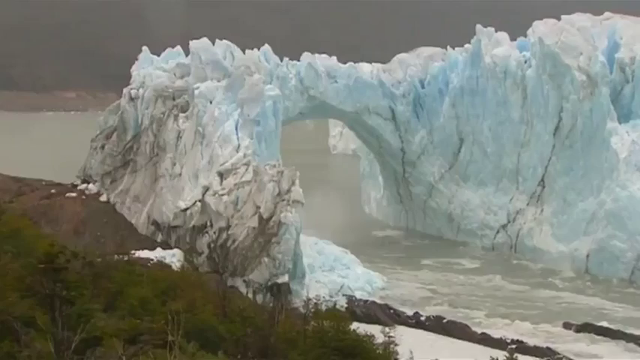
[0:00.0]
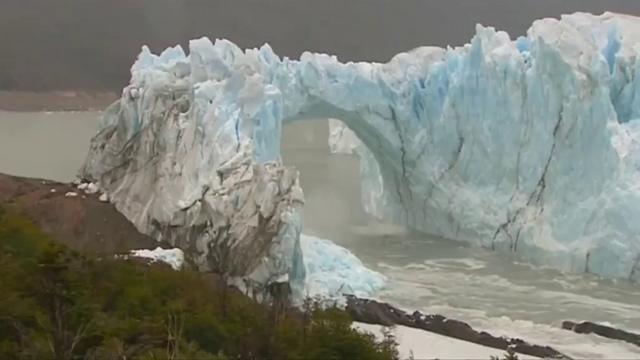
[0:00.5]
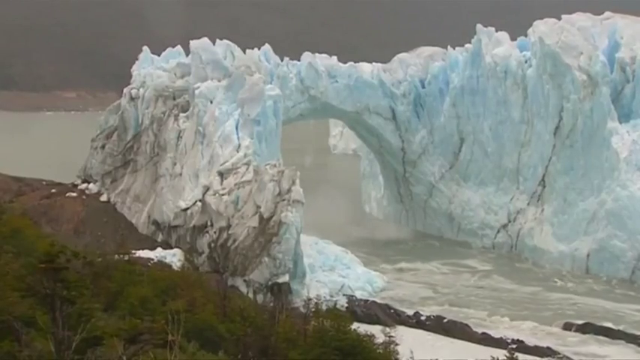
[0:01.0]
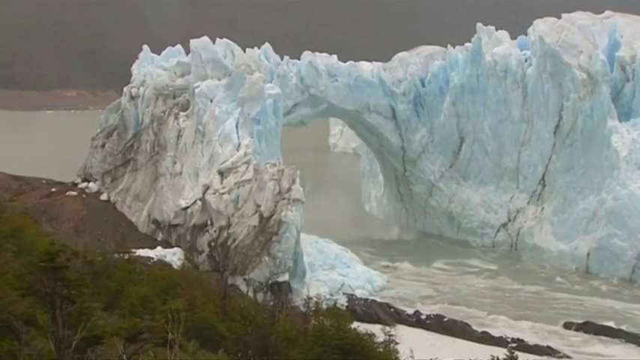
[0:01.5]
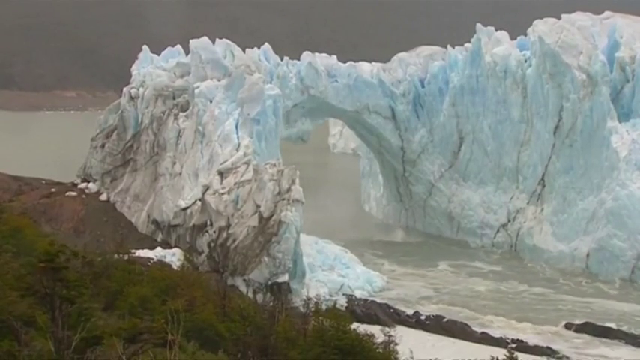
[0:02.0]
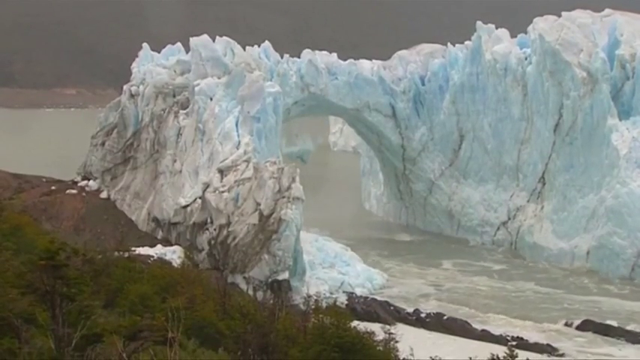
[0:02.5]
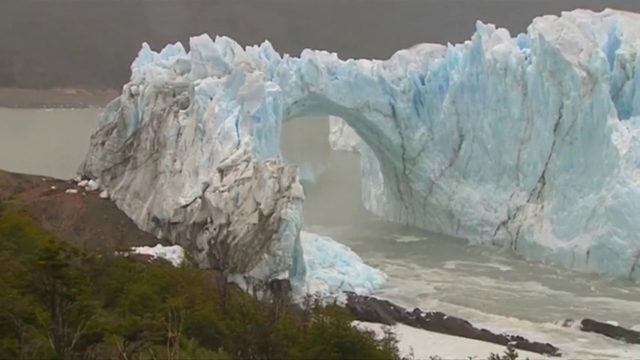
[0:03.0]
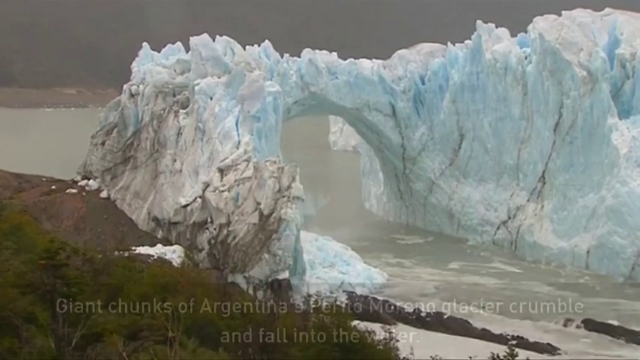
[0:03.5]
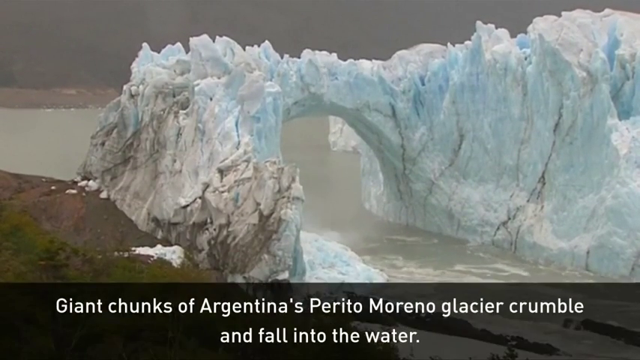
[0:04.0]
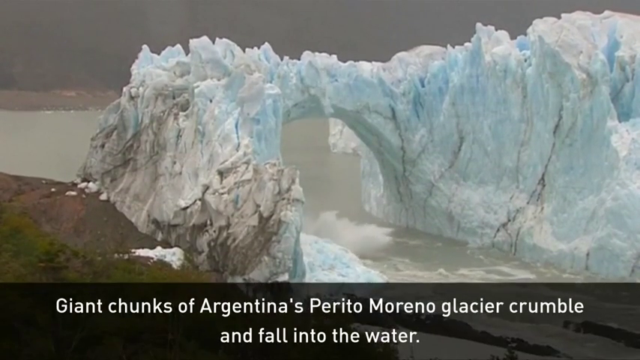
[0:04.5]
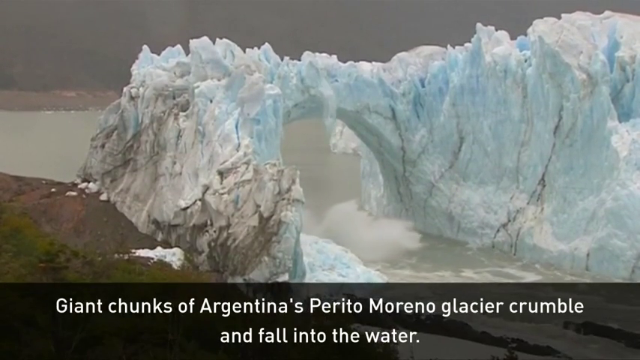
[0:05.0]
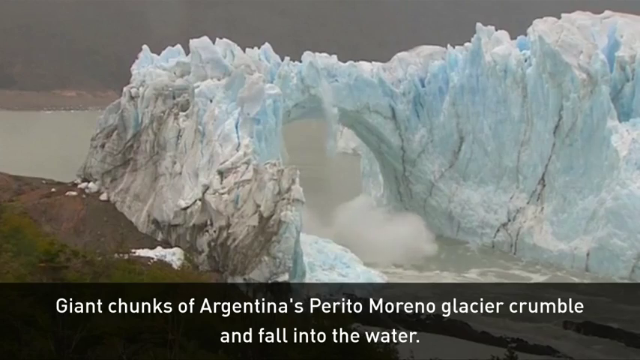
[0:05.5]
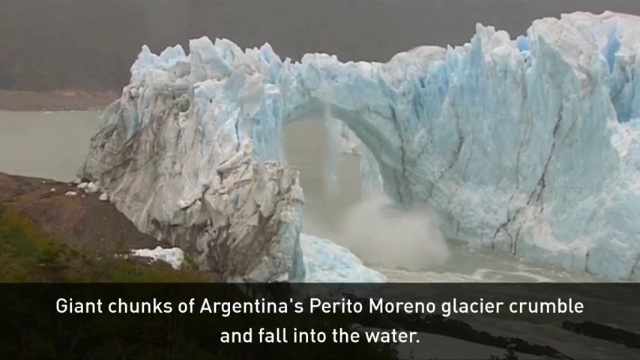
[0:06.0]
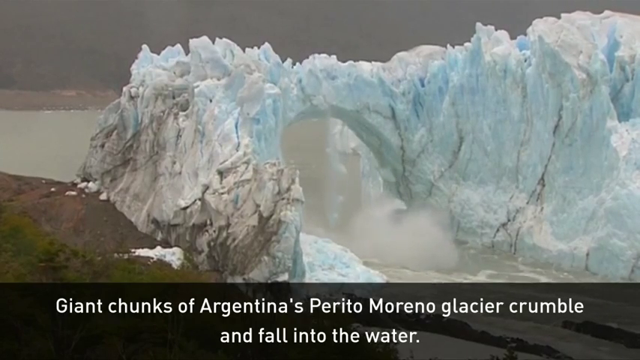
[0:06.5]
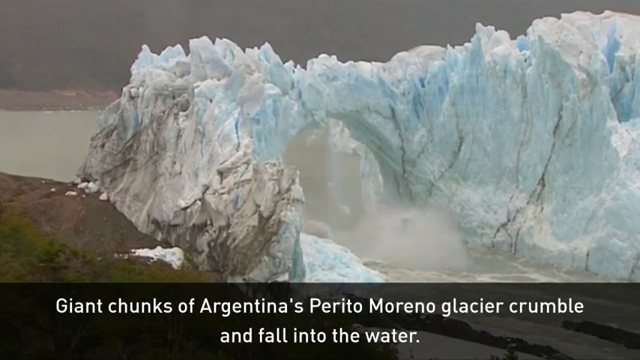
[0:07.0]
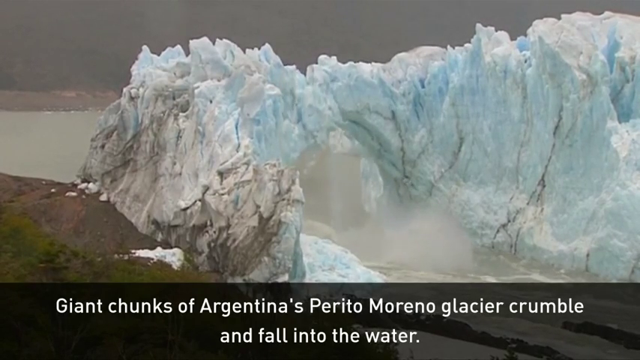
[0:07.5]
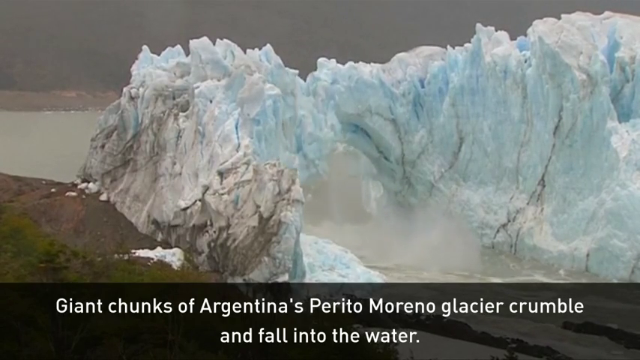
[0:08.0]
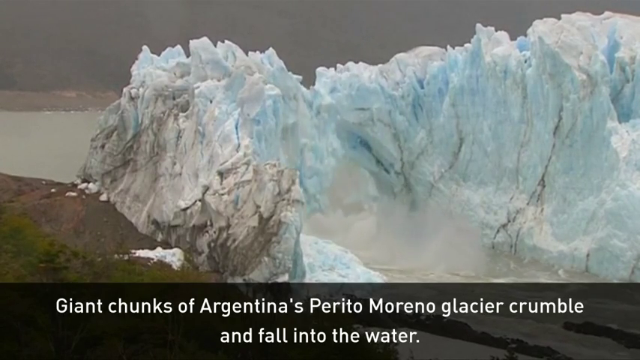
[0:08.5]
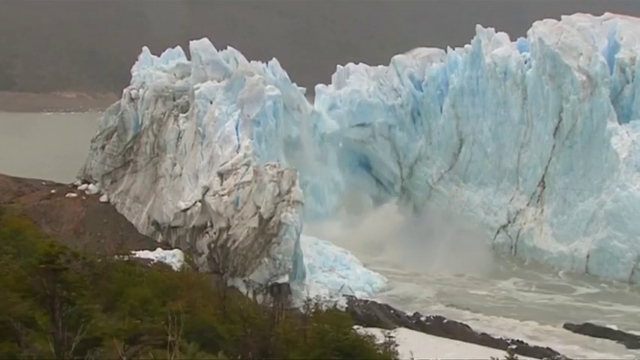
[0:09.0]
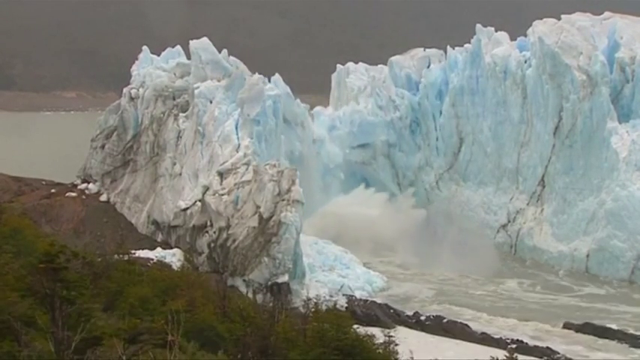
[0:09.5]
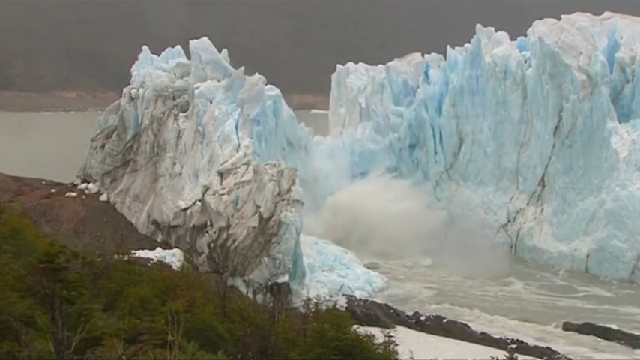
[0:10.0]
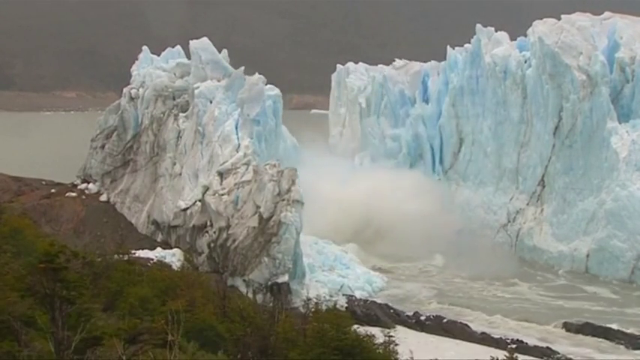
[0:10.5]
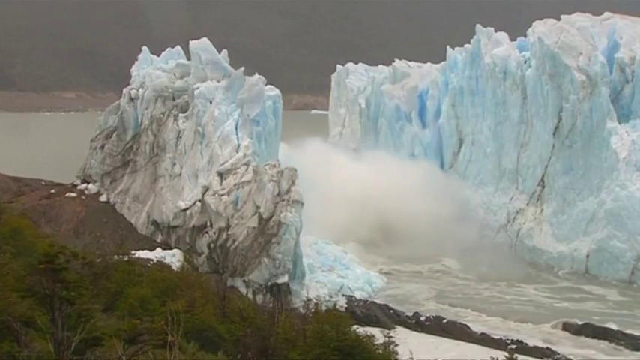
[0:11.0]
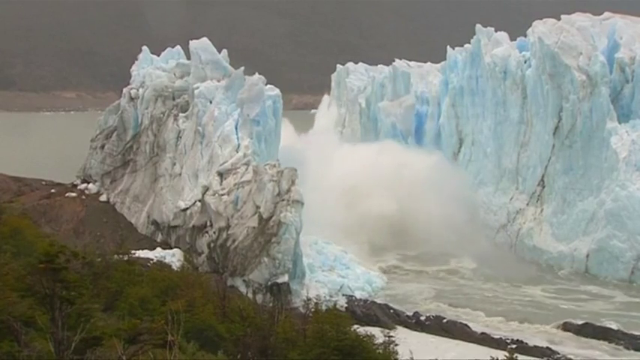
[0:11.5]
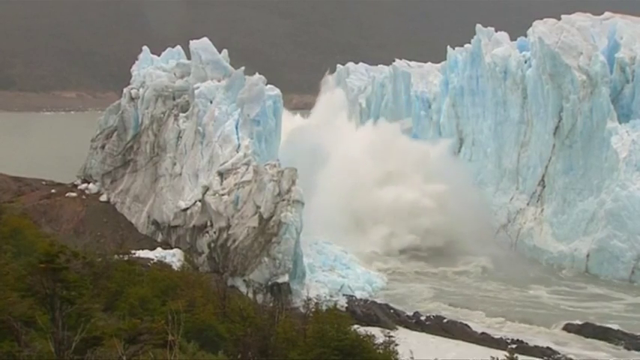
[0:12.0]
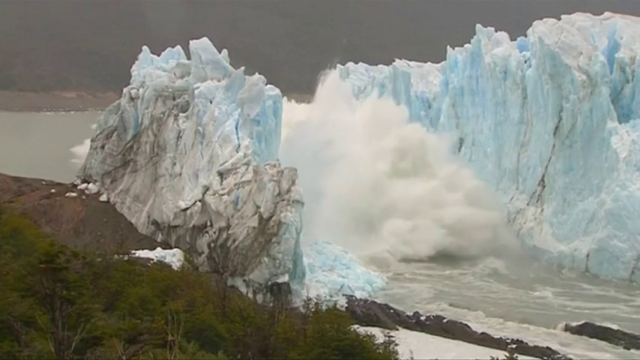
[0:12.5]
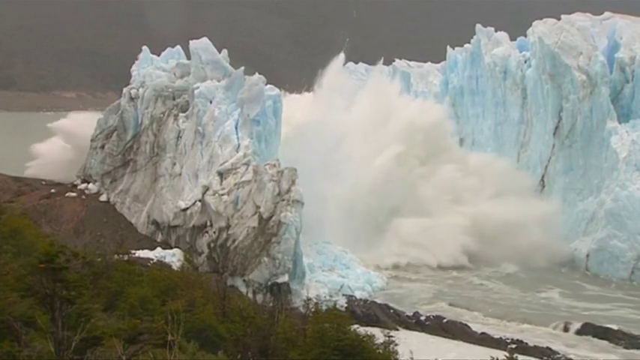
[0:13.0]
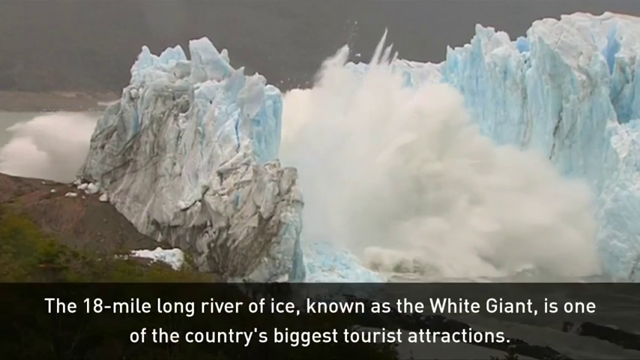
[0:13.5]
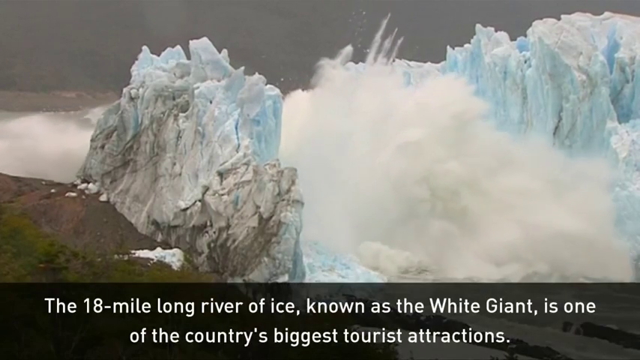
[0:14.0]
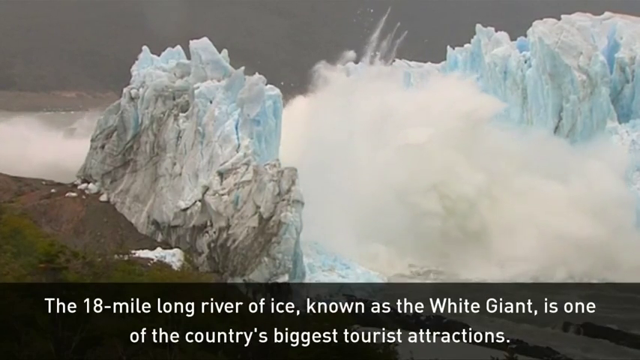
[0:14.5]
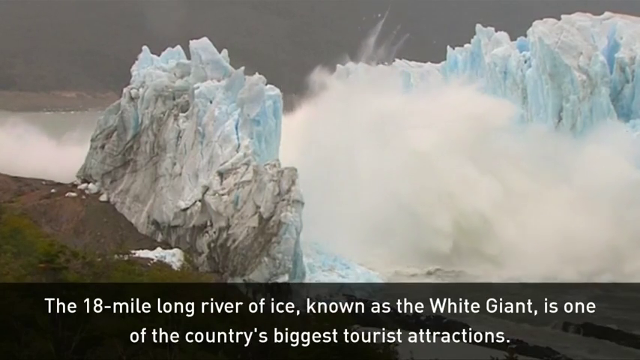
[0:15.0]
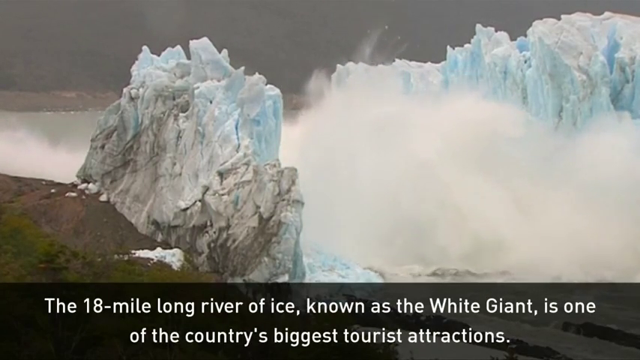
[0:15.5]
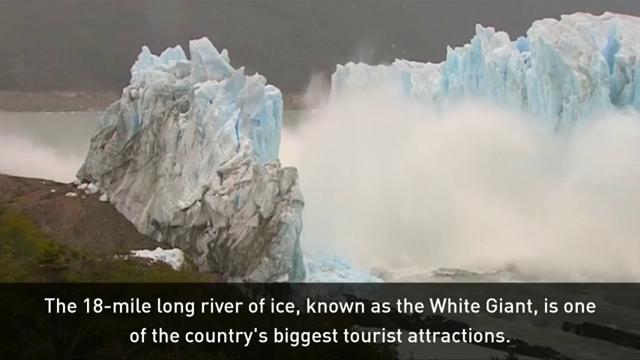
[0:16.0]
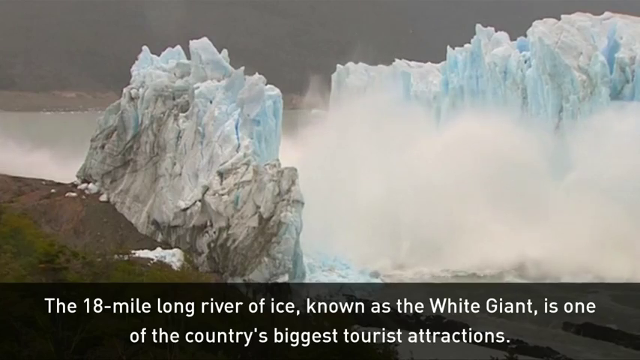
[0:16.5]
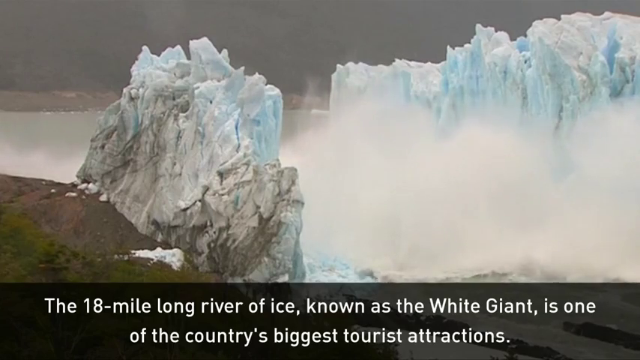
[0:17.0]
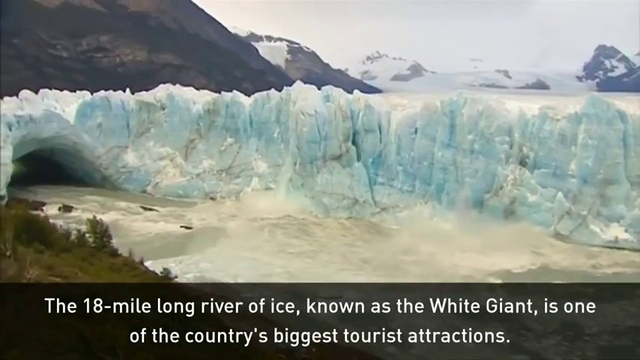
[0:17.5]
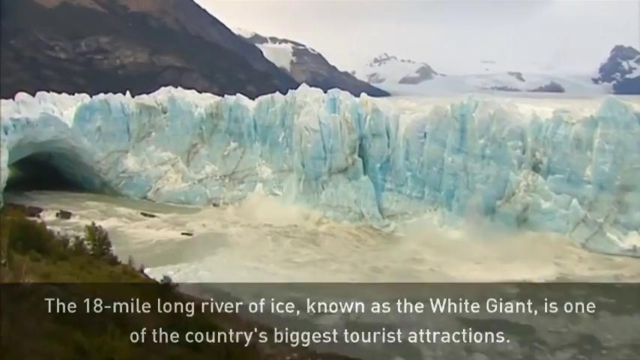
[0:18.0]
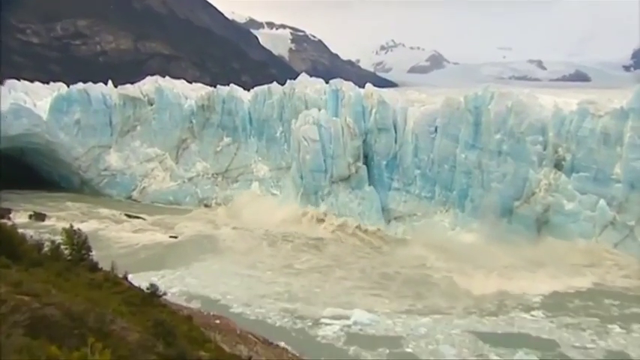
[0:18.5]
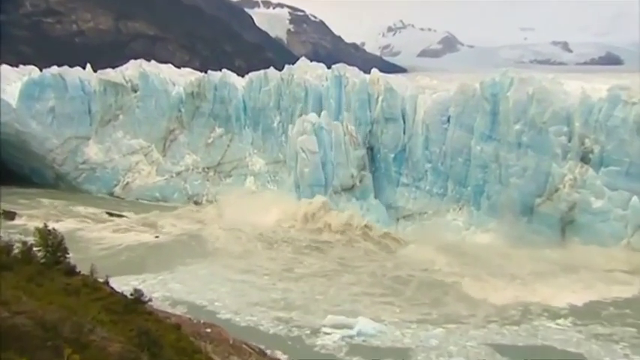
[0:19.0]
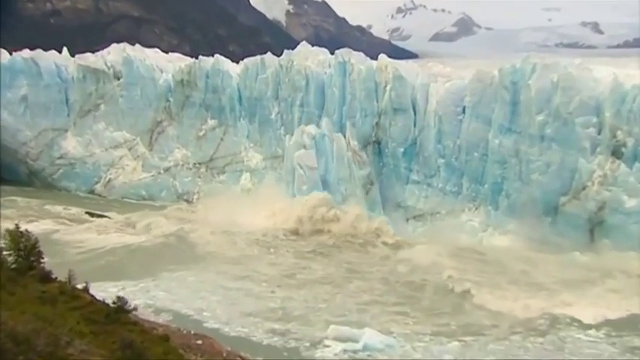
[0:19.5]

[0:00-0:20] Water travels underneath an ice formation that looks almost like a tunnel of ice. To the left there is some dirt and some trees, and the background is kind of gray. More water is visible, flowing beneath the ice formation. The bridge of the ice formation starts to crack and fall into the water, making a massive, explosive splash that sends water from front to back, probably 20-plus feet into the air. The video then transitions to a different photograph of an iceberg or ice formation along a waterway. The water travels kind of downstream, and one section of the ice, roughly the center portion of the structure, begins to fall into the water as the shot cuts off.